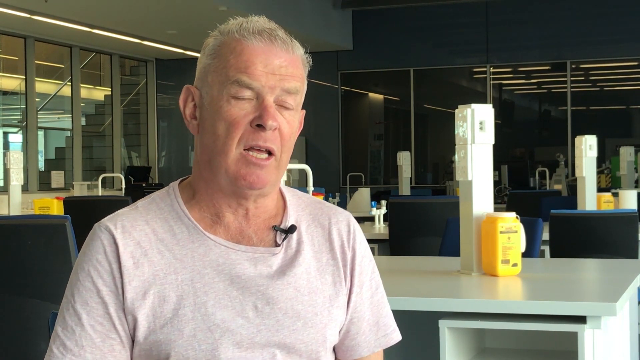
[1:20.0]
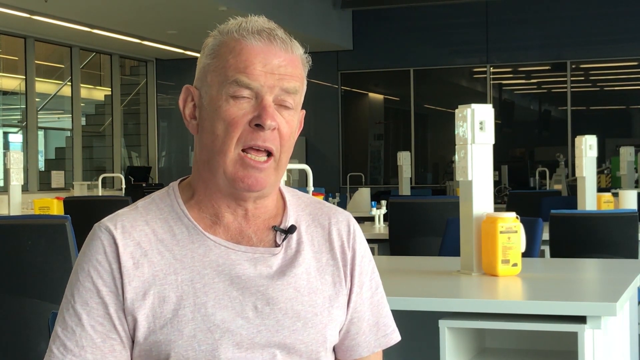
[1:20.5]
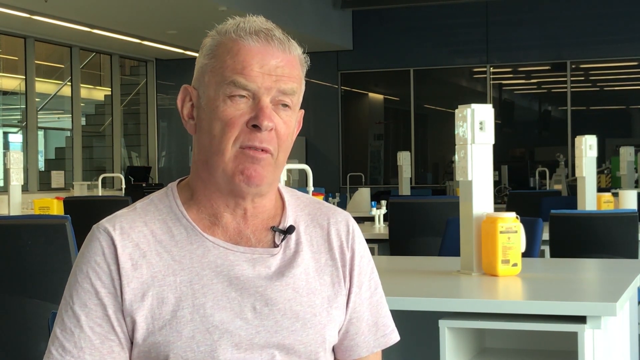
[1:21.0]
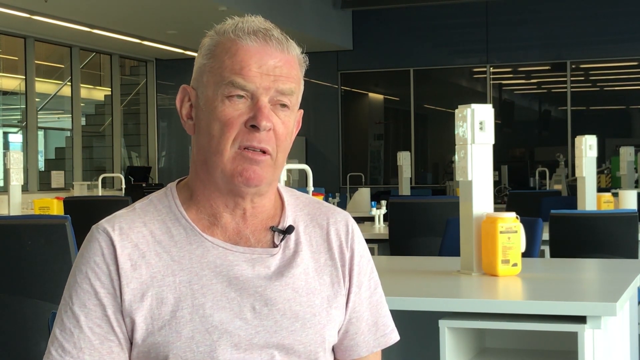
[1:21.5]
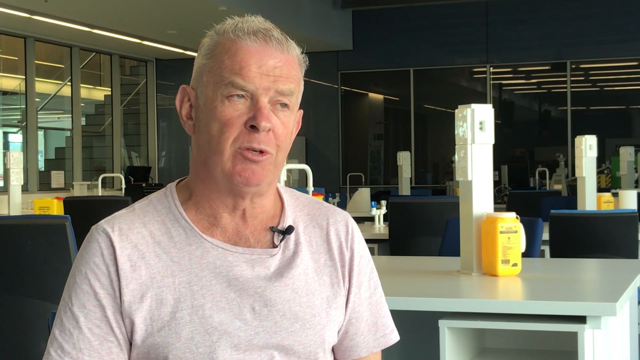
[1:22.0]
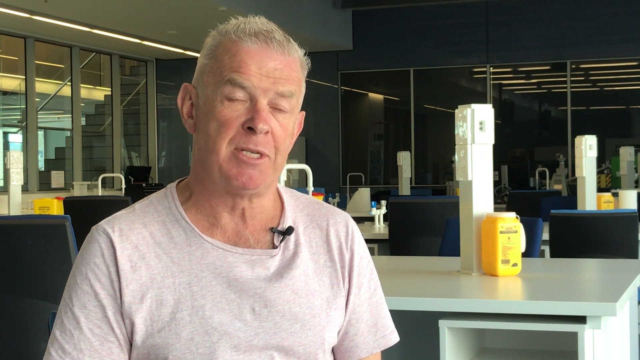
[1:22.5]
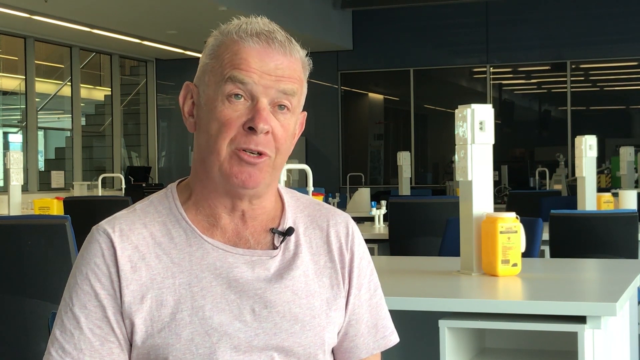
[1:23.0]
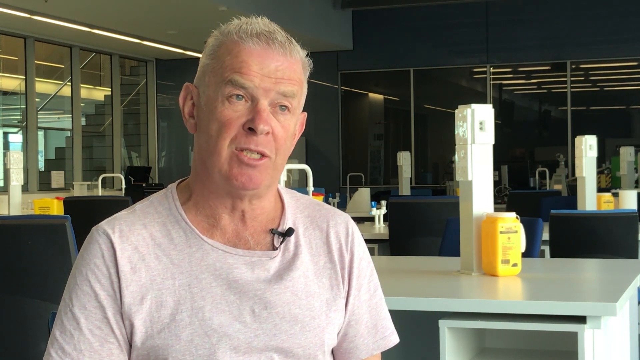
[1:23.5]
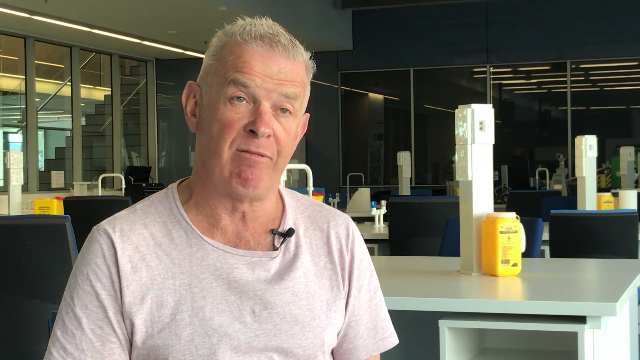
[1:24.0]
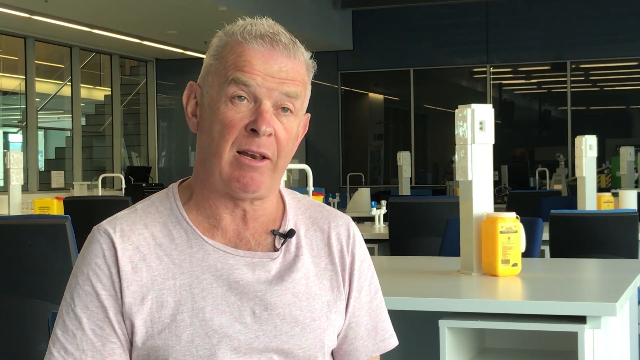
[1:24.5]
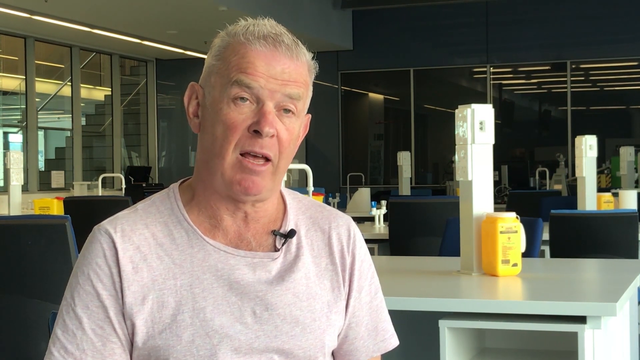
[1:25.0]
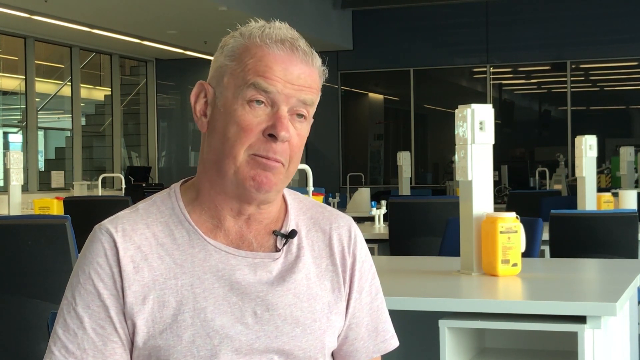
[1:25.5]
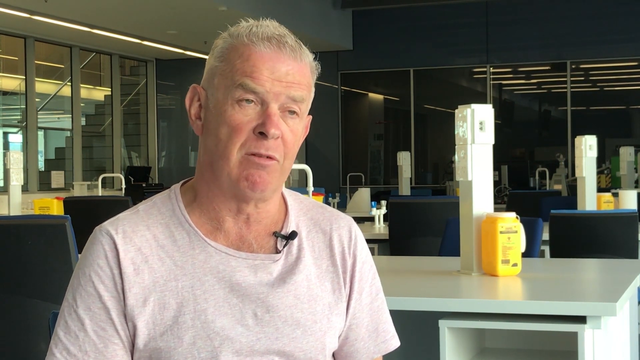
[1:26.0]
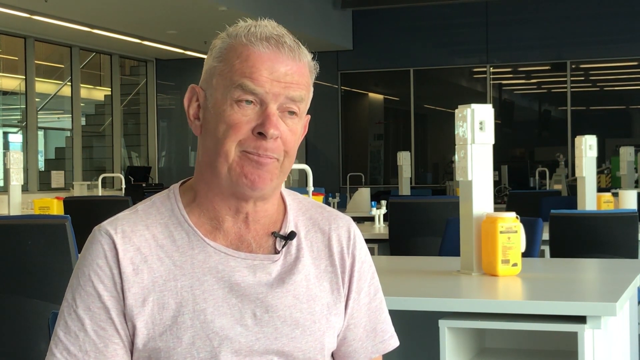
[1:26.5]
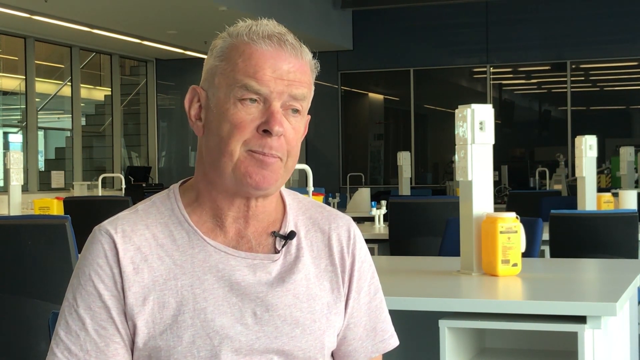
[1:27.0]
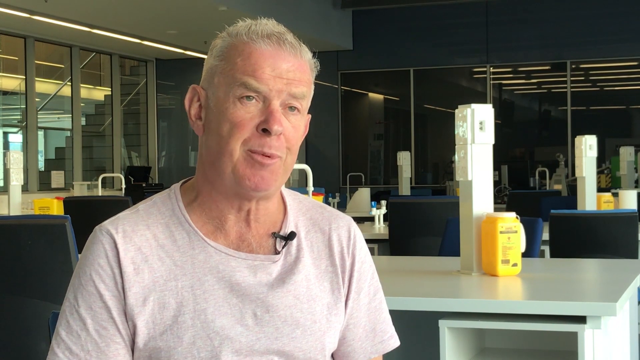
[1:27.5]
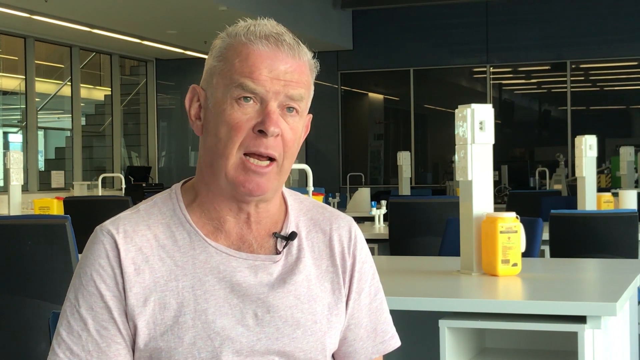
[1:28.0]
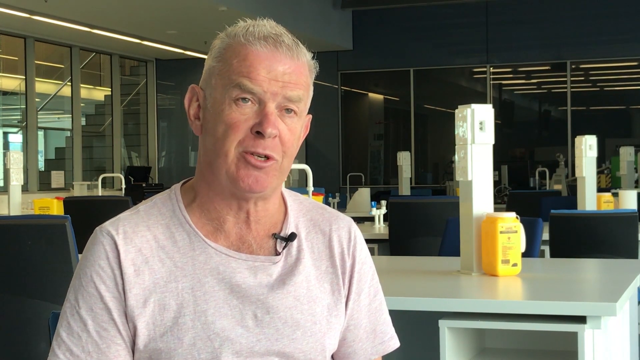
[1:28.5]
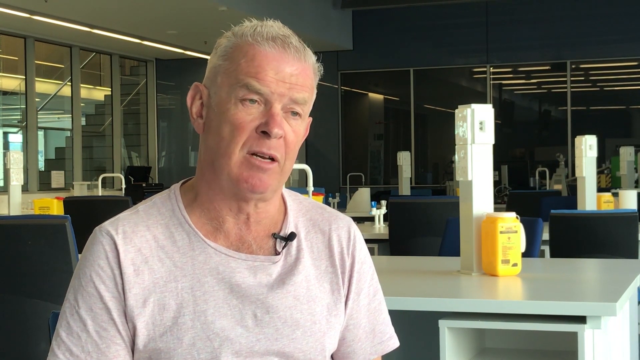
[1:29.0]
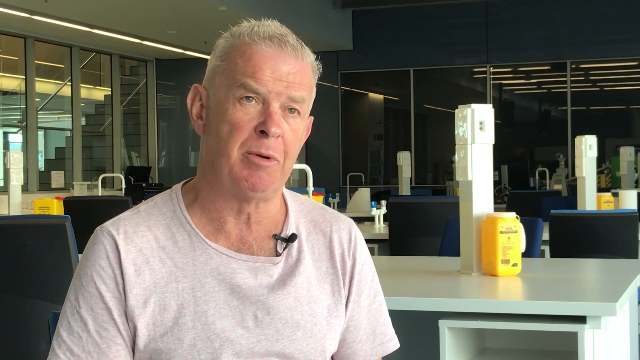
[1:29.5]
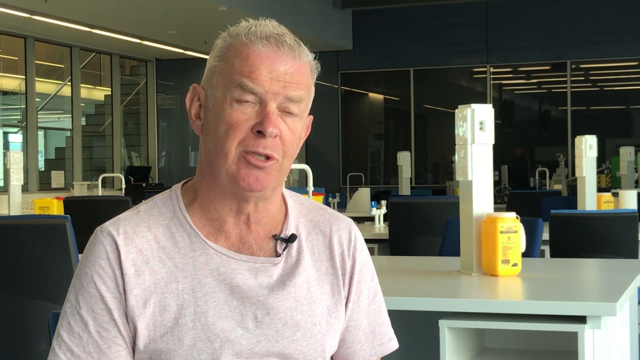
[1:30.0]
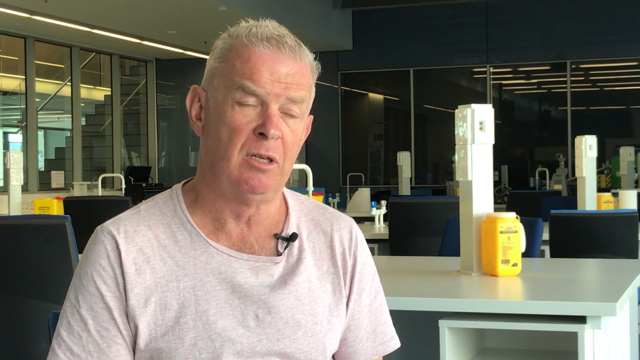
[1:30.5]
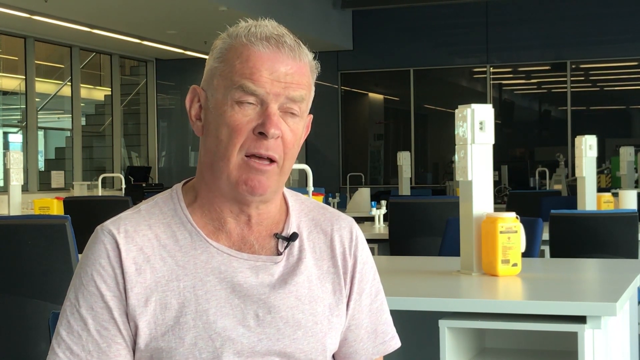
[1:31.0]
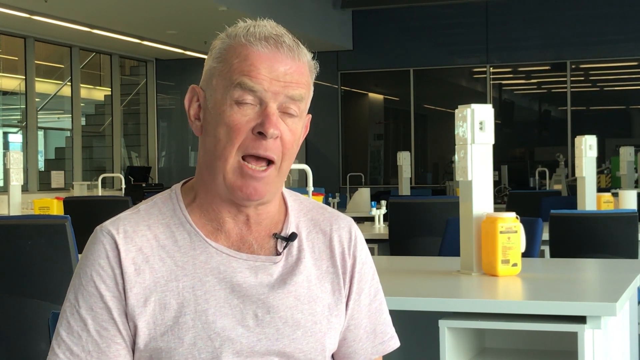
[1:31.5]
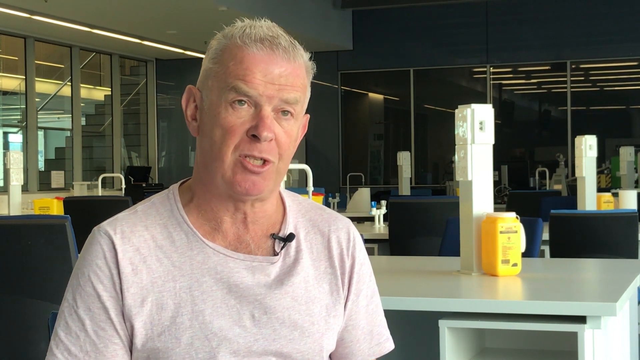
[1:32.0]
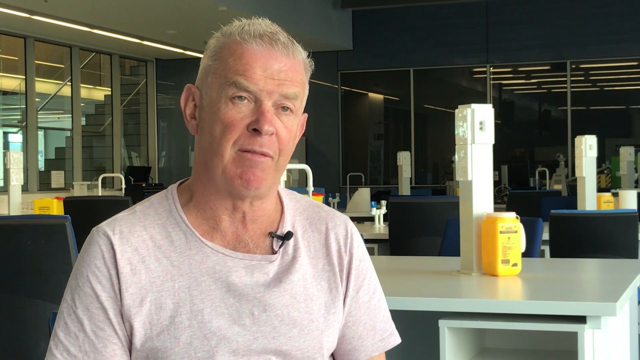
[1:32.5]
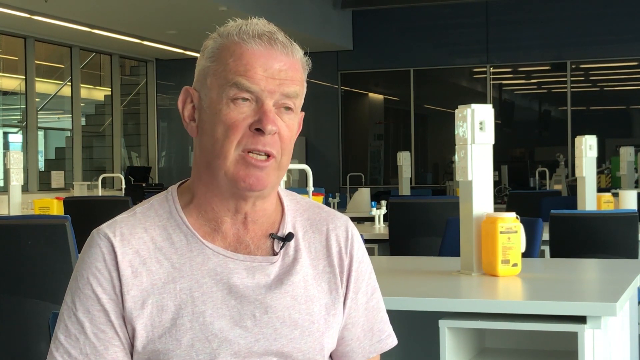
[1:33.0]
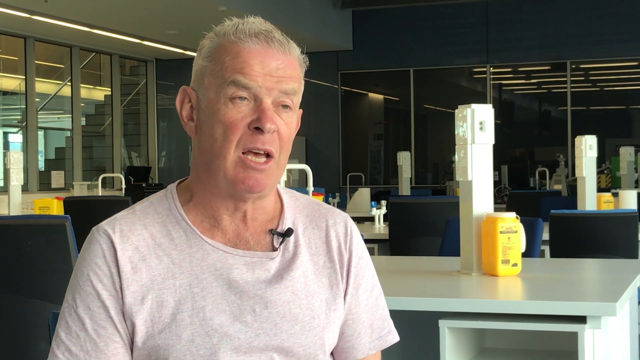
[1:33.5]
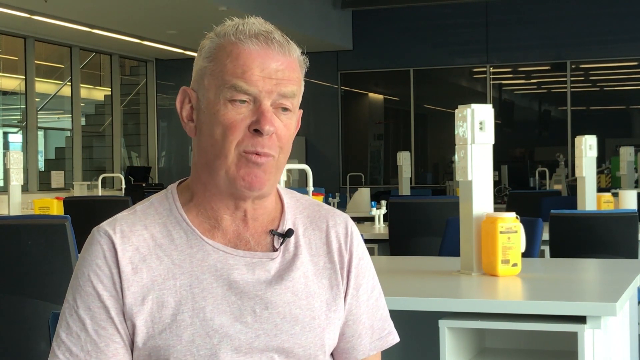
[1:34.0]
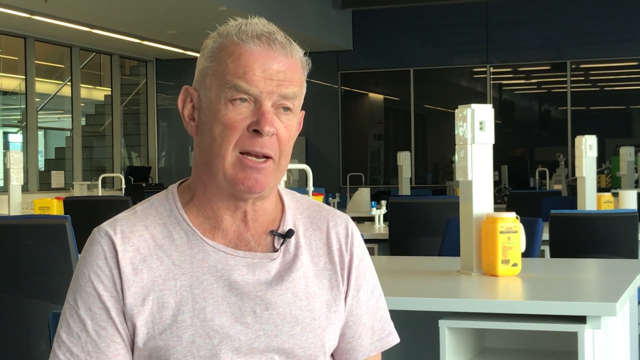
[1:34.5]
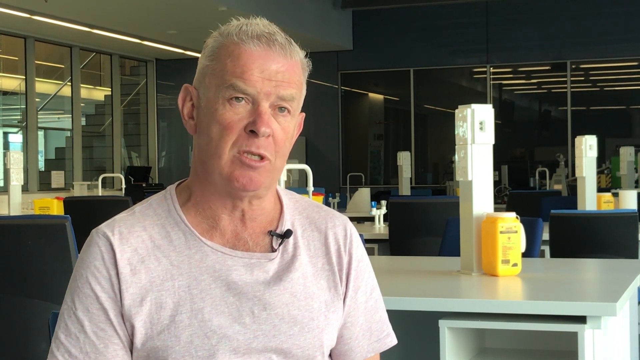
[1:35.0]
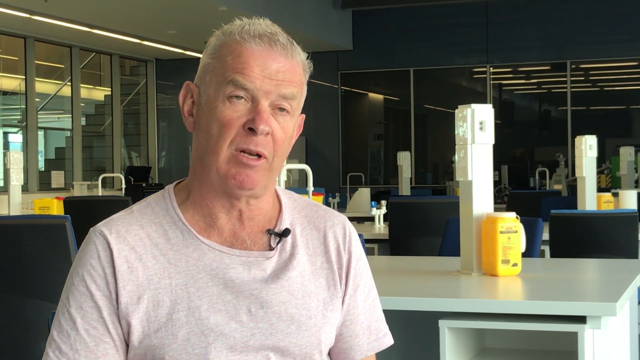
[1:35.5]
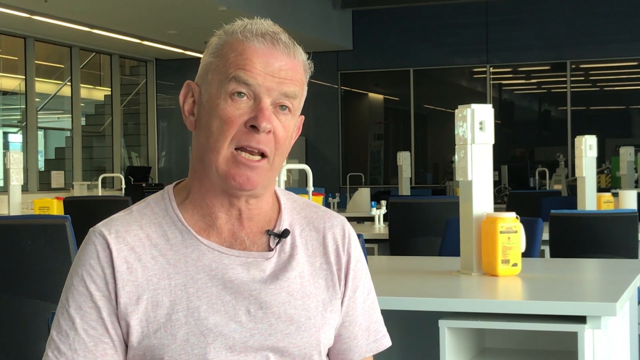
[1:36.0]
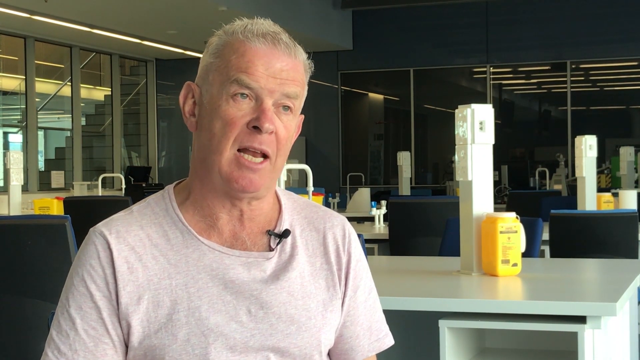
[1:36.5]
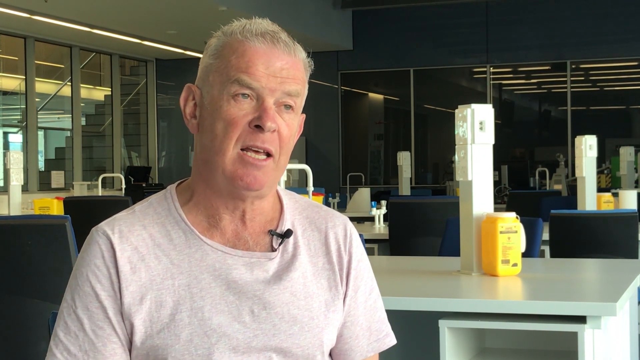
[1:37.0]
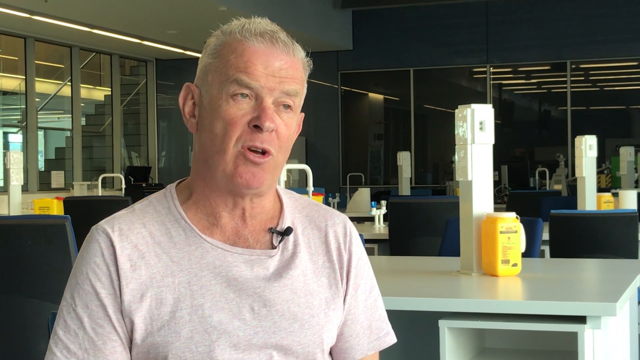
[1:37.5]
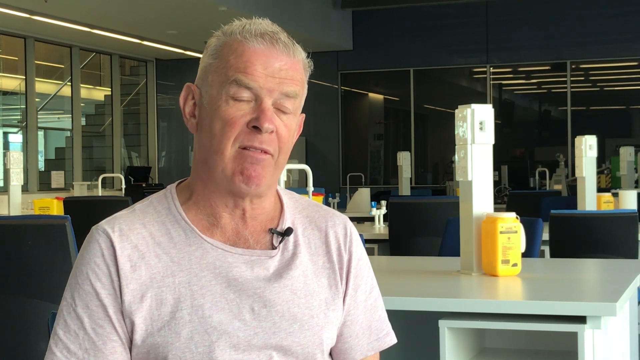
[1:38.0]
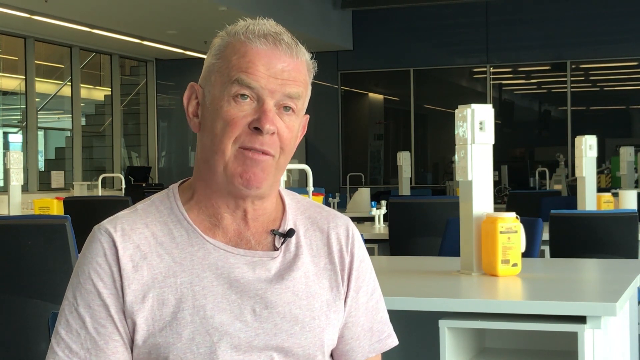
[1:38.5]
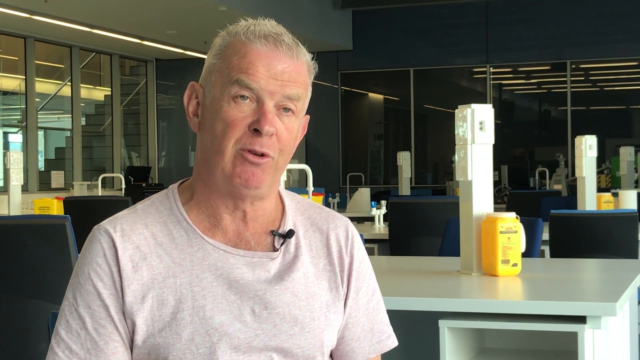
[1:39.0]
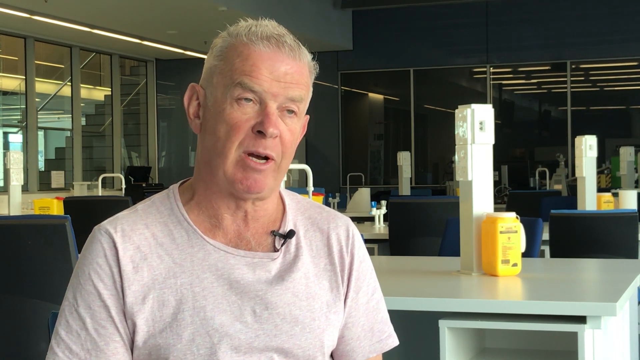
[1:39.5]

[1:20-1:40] A man is interviewed in some kind of lab setting. He wears a crew neck shirt with a lapel microphone attached to the collar, pointed towards the top right corner of the screen. The lab has multiple glass walls, and through those on the left side a staircase and a lobby are visible. Behind the man are multiple work desks set up in various rows, each with its own tower of plugs and ethernet ports, next to which there is a disposable hazardous materials box, as well as valves for gas and sinks. The man looks towards the top right as he thinks of his words and continues talking to the microphone. He moves his head slightly to the viewer's right, seemingly emphasizing a point, and continues talking directly at the camera. He shakes his head left and right as he says something, then continues talking, blinking rapidly; at the end of seemingly every sentence he looks upwards and to the viewer's top right.